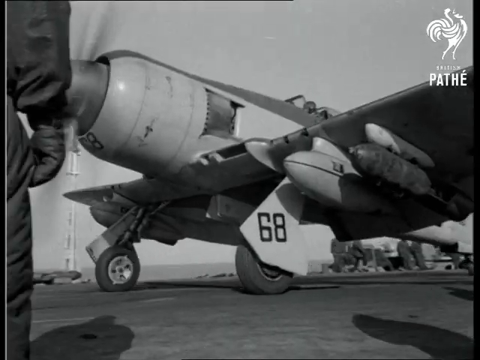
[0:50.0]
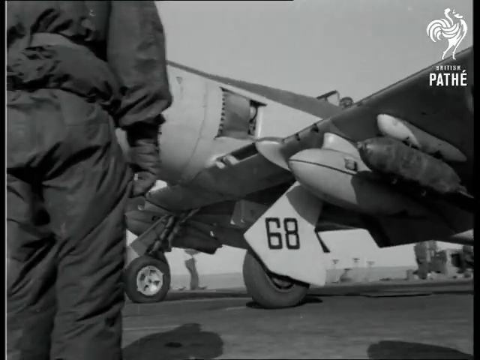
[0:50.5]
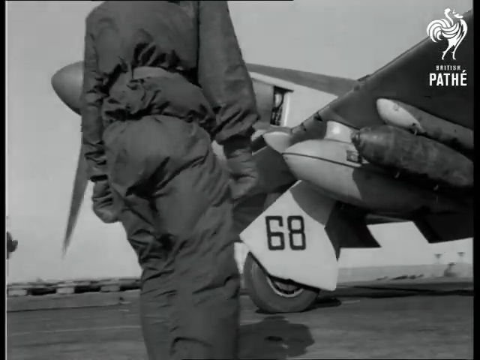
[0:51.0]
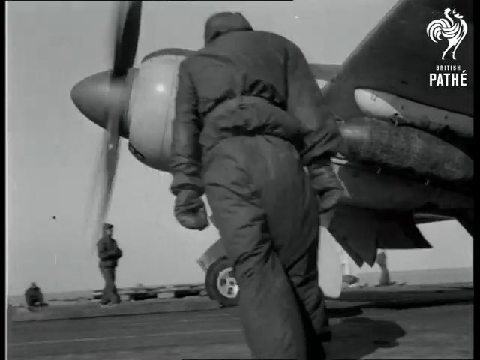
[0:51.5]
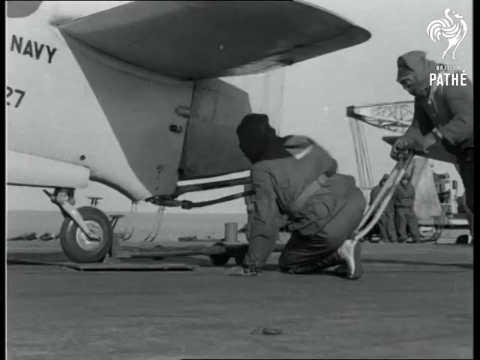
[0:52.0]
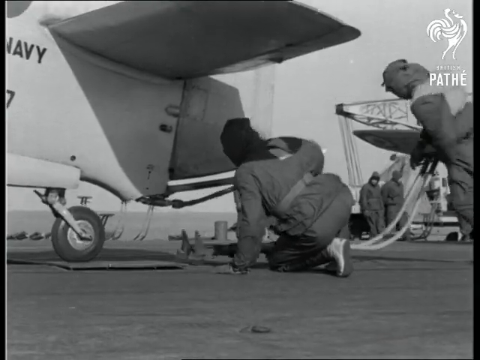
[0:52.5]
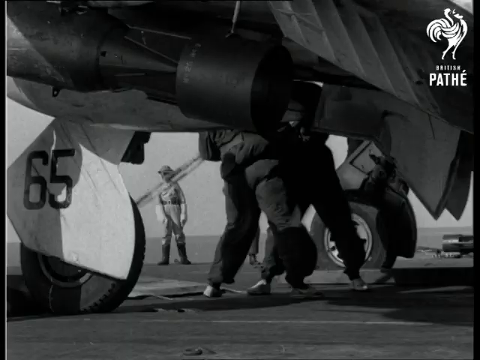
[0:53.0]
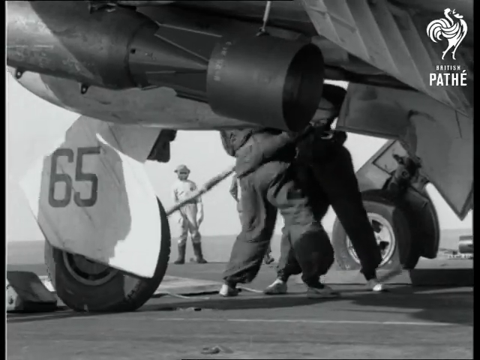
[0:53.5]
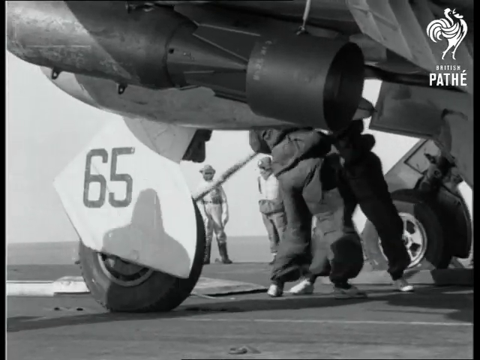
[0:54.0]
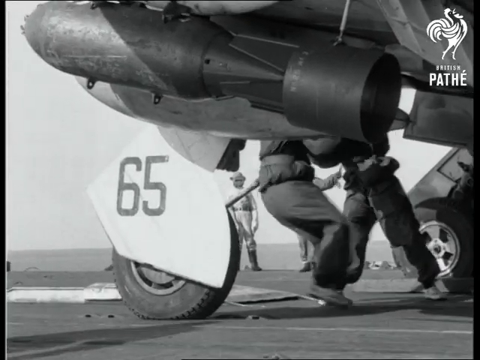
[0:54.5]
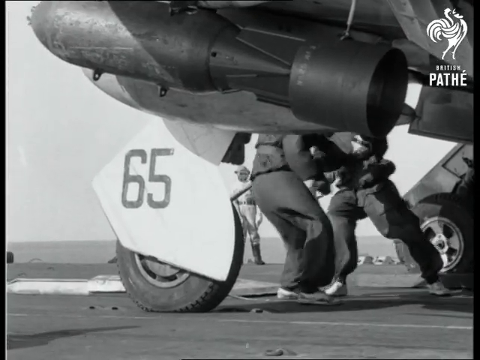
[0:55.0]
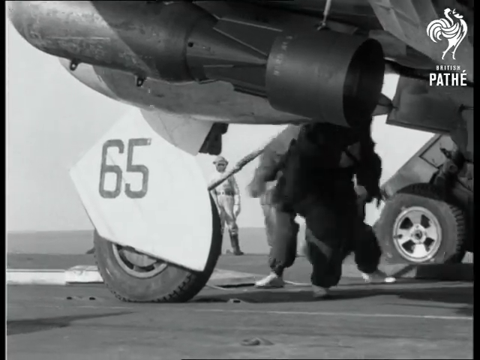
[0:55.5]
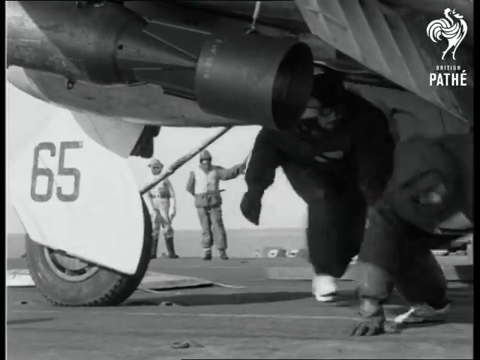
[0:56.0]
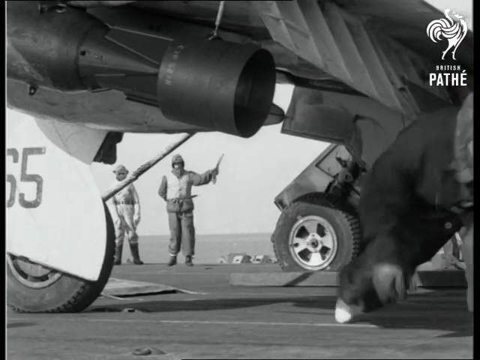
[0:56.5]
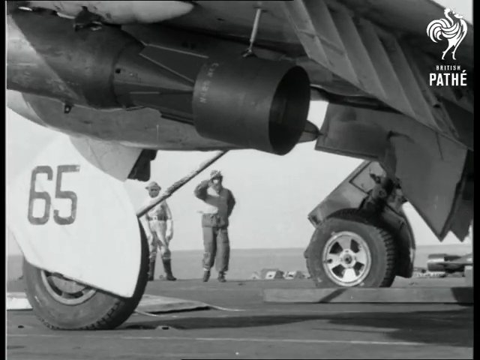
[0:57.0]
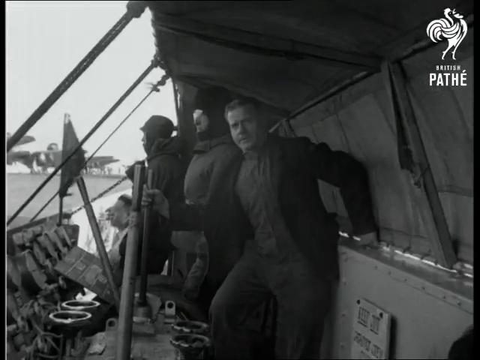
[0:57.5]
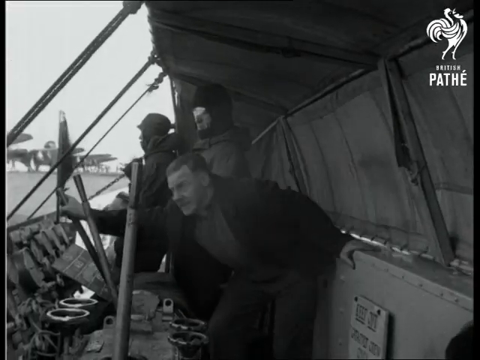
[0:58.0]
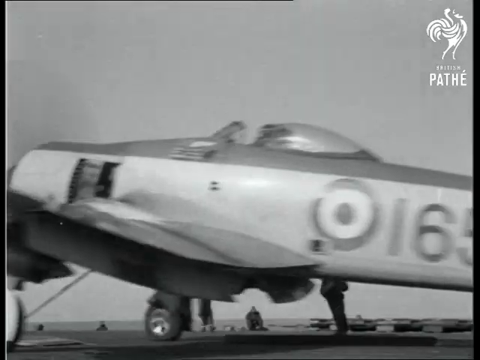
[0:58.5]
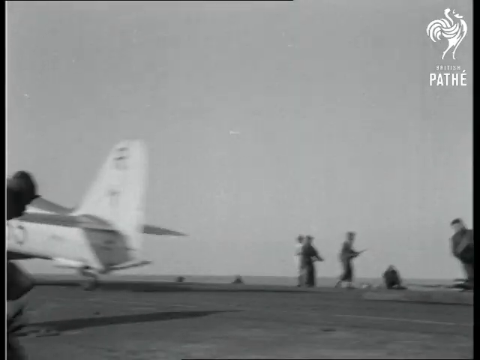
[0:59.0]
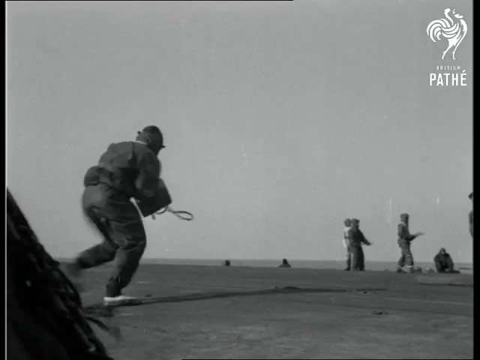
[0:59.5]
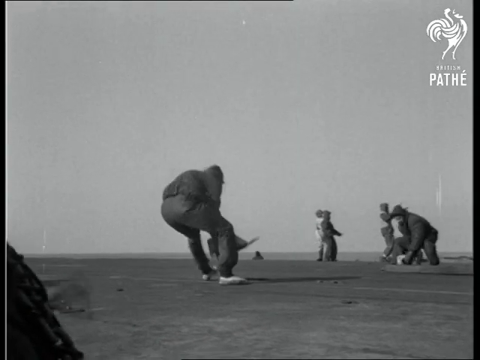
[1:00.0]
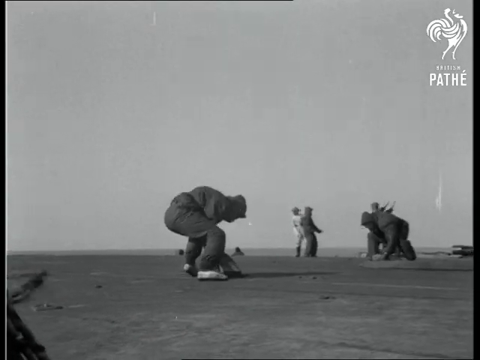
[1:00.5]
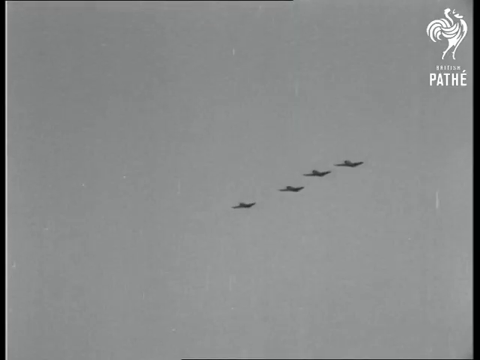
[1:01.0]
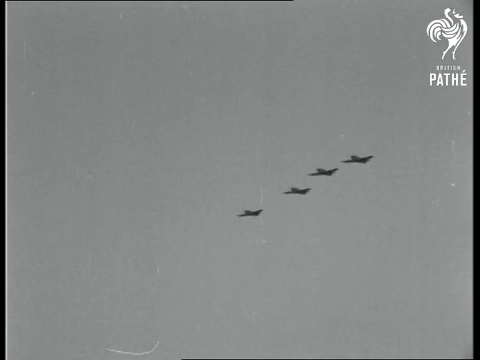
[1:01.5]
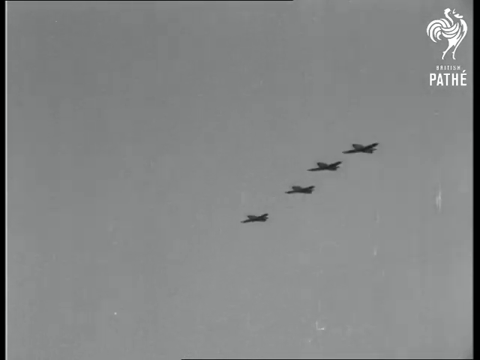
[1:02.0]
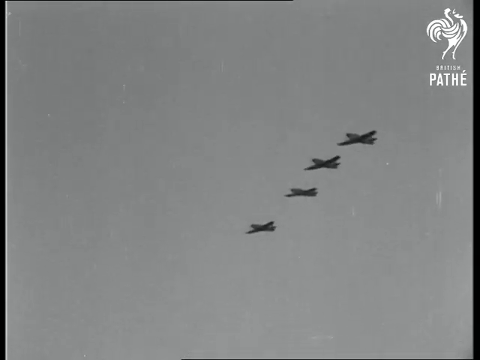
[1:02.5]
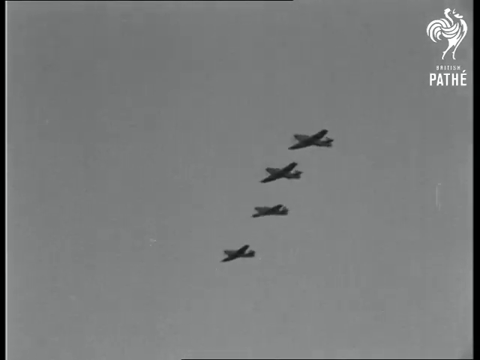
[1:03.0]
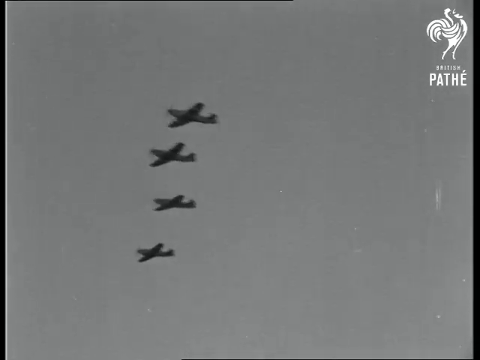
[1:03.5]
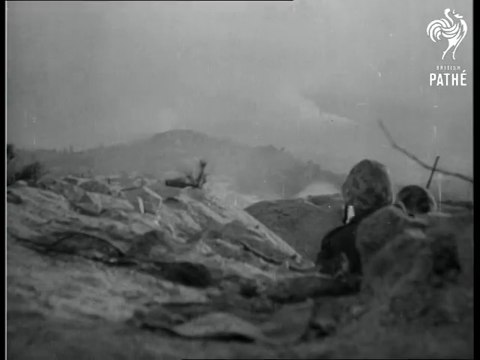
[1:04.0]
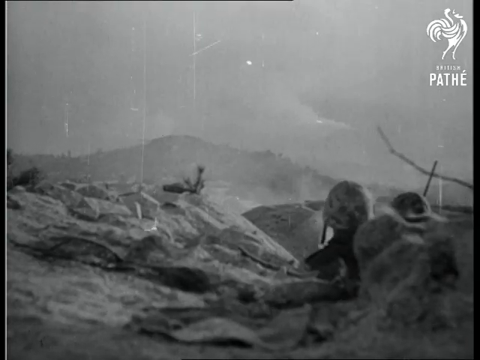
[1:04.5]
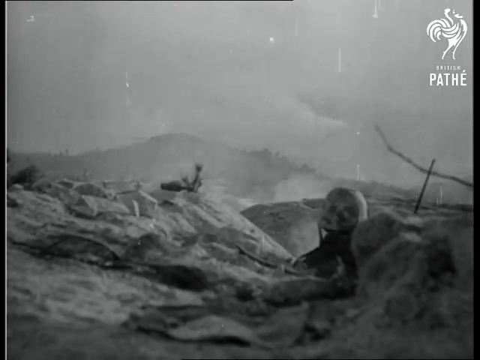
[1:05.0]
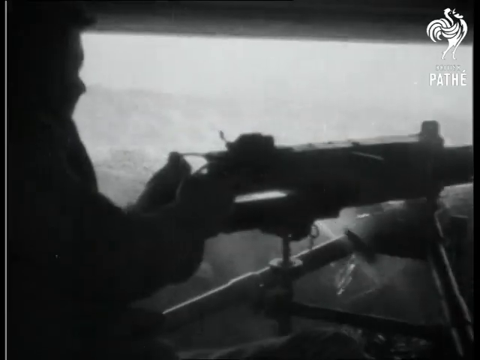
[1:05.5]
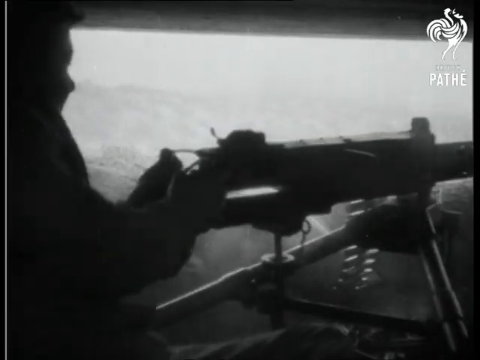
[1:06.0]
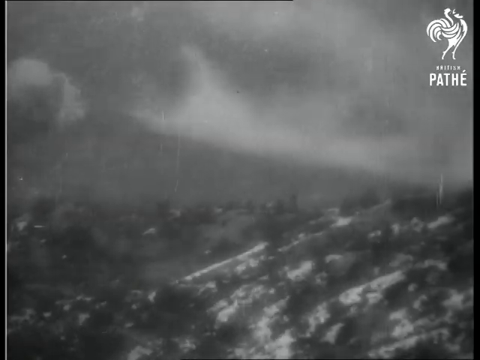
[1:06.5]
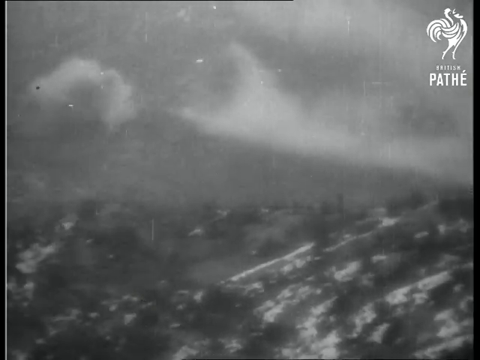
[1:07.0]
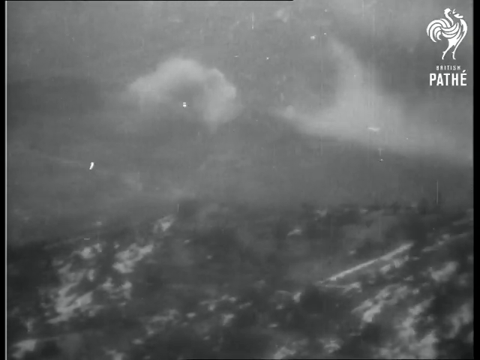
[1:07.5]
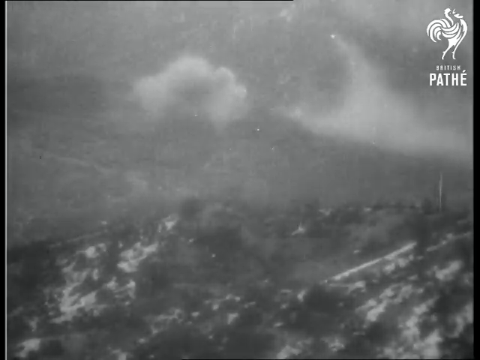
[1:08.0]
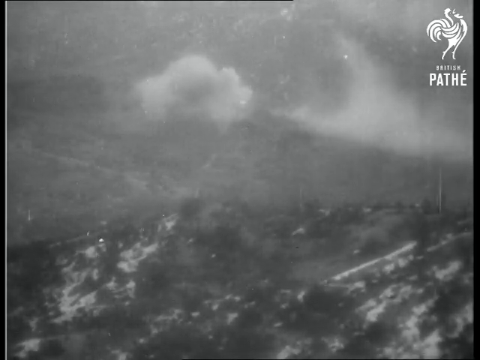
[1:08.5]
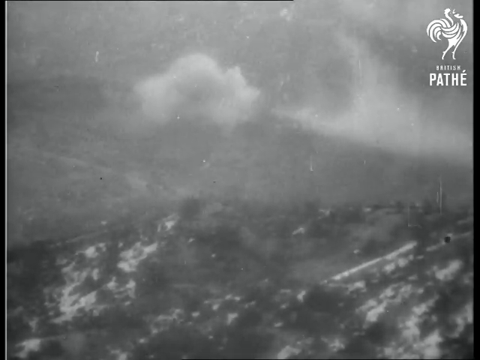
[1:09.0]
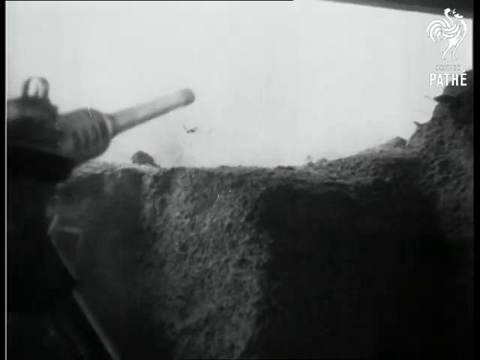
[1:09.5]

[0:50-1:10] A shot from below shows one of the planes on the carrier deck, with the pilot in the cockpit and the propeller blurred with motion. The number 68 appears in various places, and ordnance is loaded under the wings: machine guns in the wings and various bombs on the wings. The plane taxis on deck. Men remove the chocks from its wheels, their hair and clothes windblown by the backwash from the propeller, and then run away. The plane moves down the carrier deck and takes off. The shot changes to four planes flying in formation above the carrier, and then to a soldier in a foxhole shooting his machine gun at the front lines.